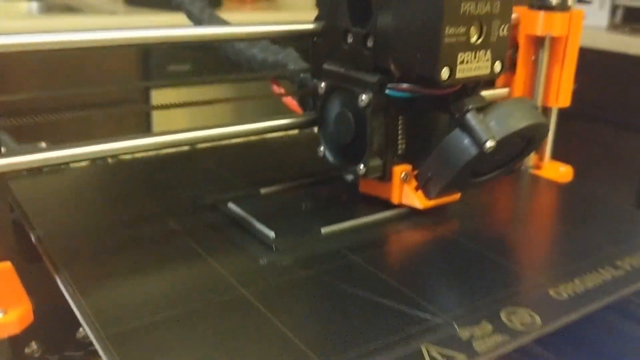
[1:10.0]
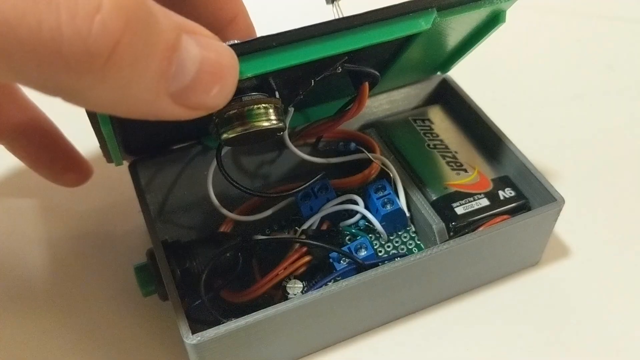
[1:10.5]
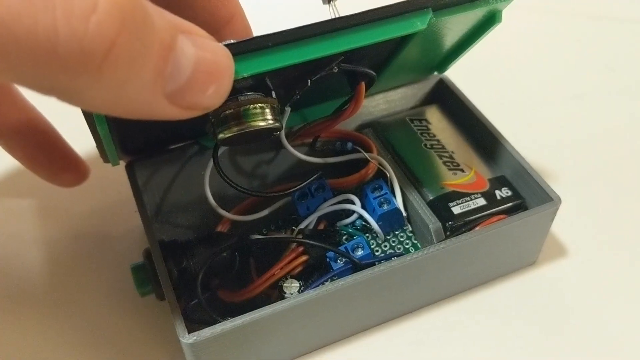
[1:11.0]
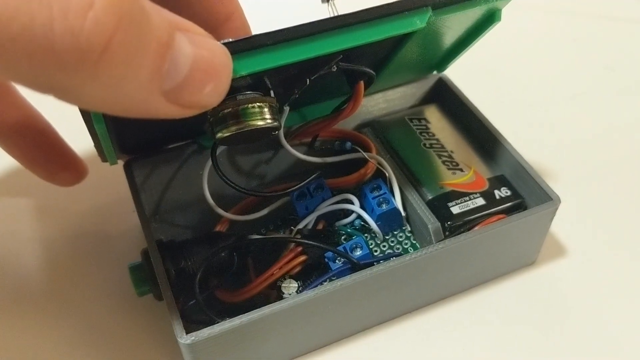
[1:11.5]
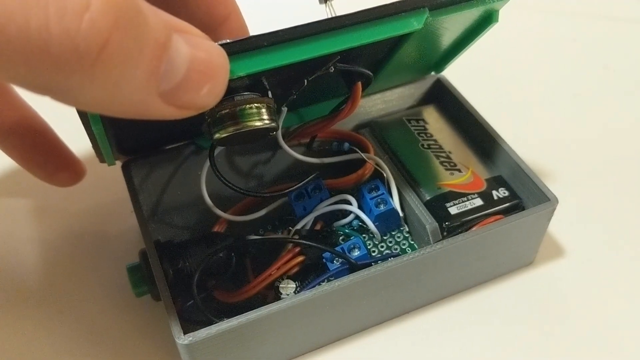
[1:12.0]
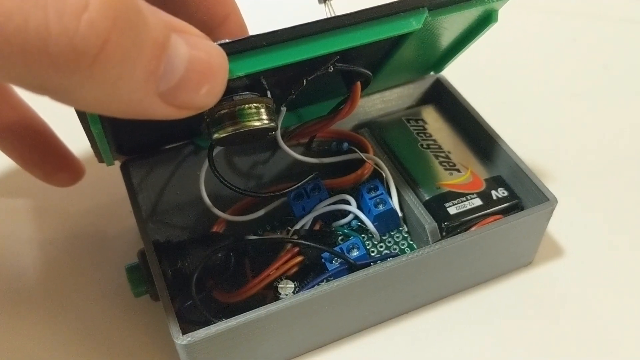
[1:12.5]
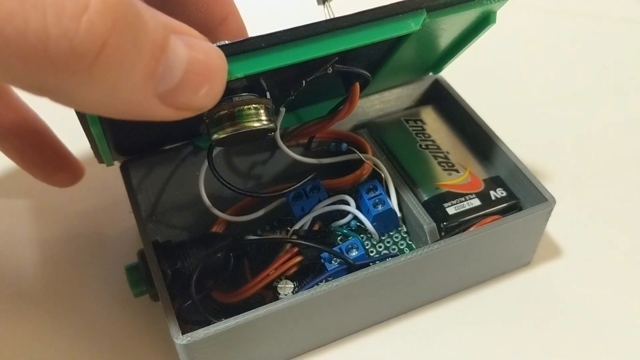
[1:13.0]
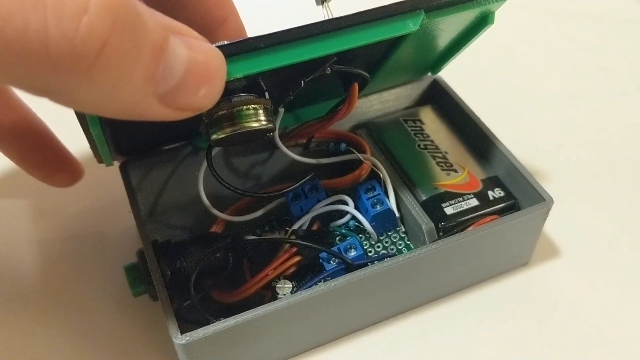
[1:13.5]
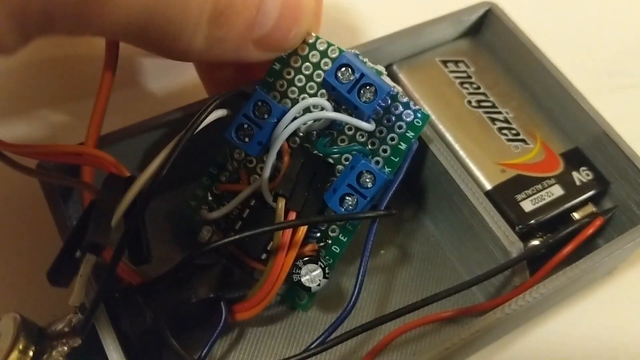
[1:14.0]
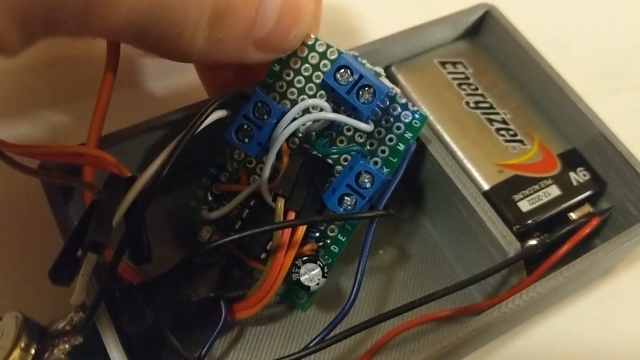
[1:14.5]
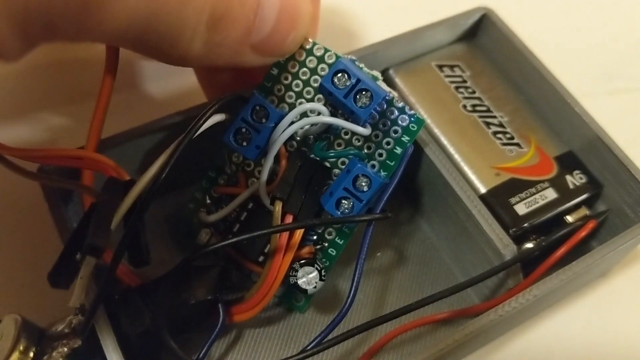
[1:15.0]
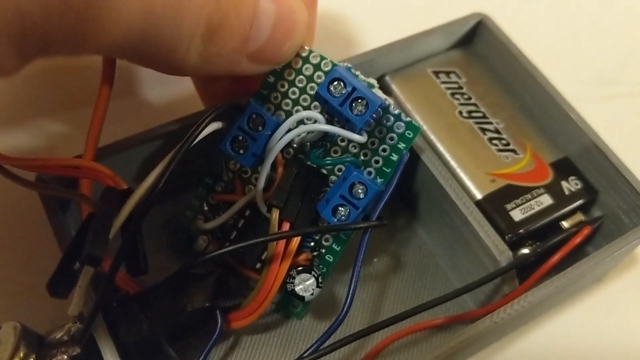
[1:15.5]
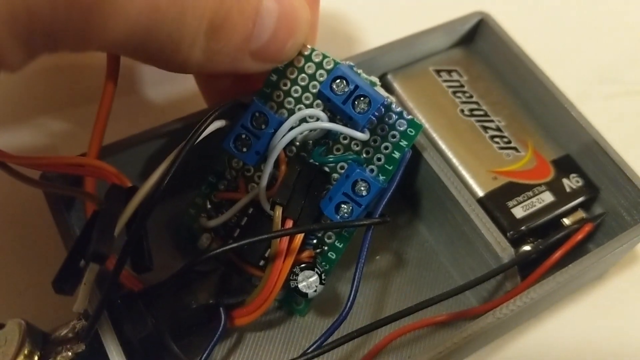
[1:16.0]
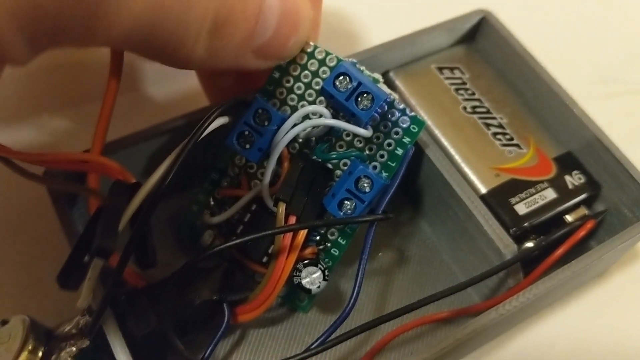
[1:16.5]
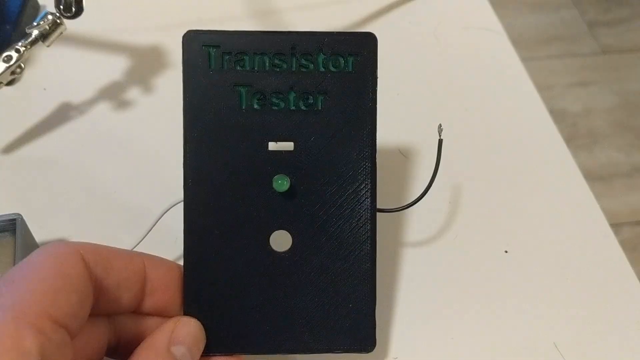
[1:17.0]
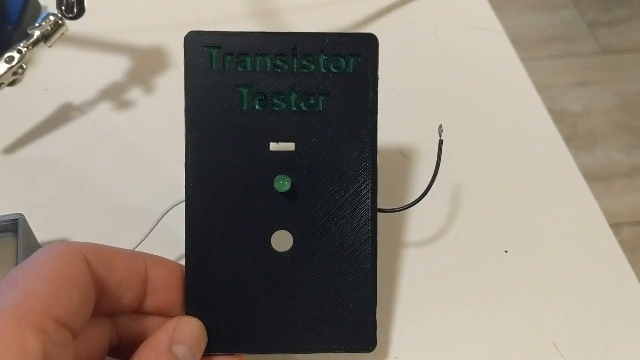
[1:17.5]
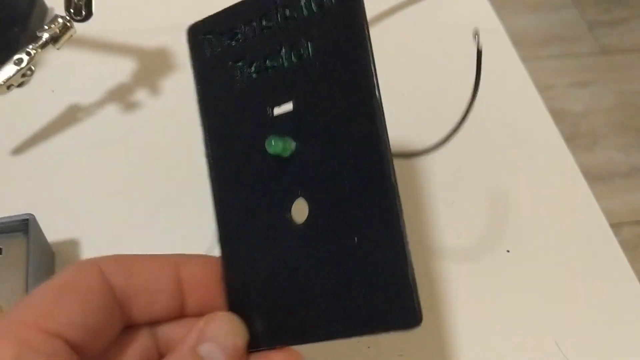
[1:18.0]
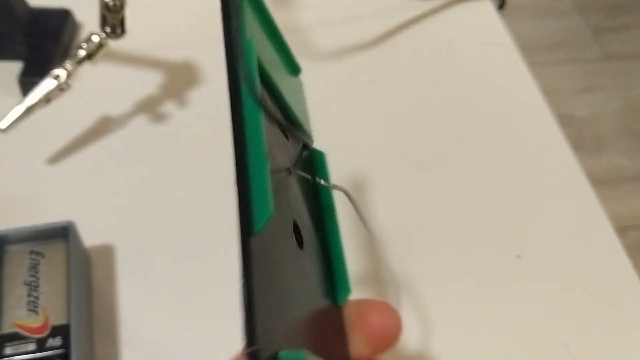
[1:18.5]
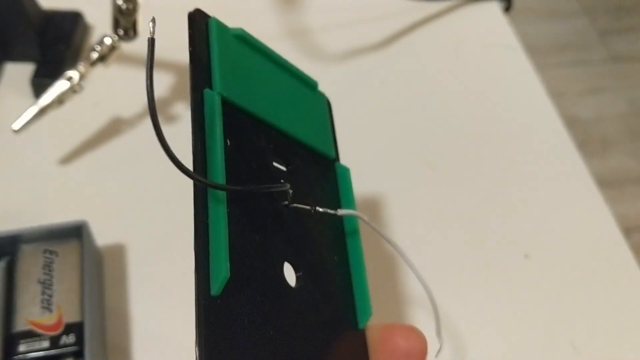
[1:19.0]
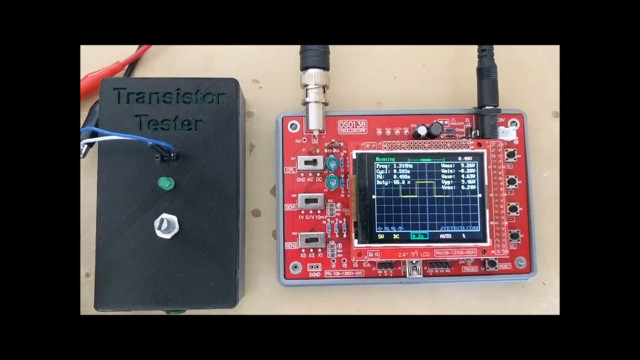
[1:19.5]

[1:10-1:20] A device is cutting and making a transistor tester. Someone holds up its pieces, revealing an Energizer battery inside that looks rectangular. The cutting device has orange and black components and says "PRUSA" on it. A person's hand opens the box, showing the various wires and components inside the transistor tester, then flips over the lid to show how thin it is.